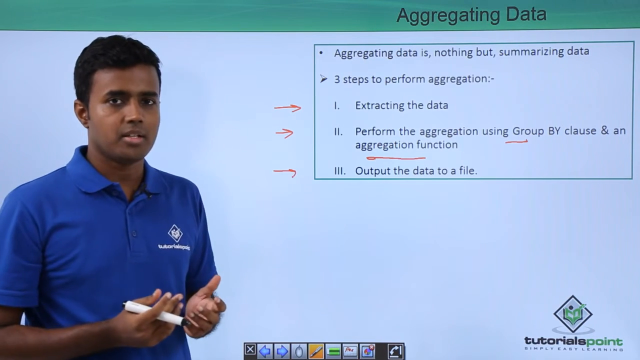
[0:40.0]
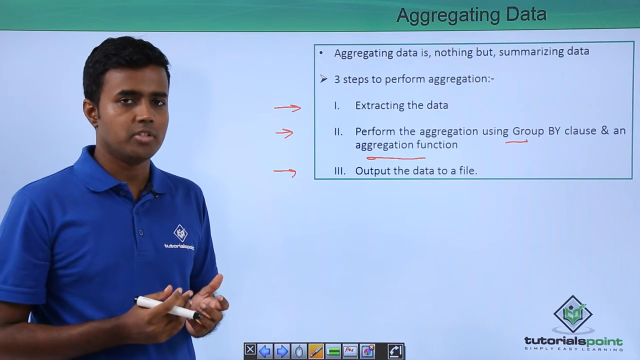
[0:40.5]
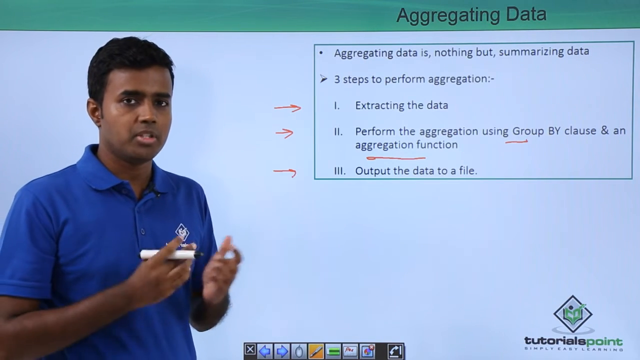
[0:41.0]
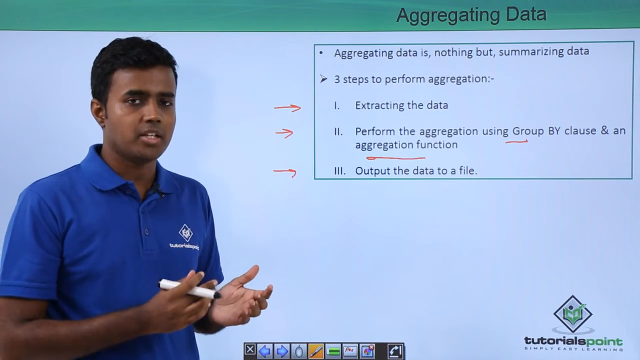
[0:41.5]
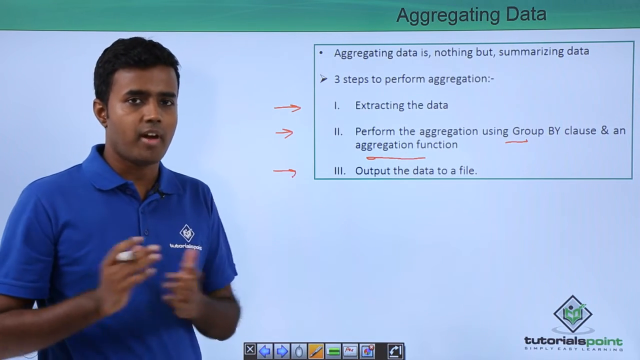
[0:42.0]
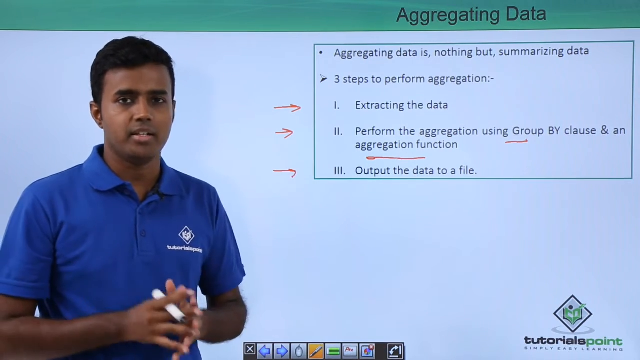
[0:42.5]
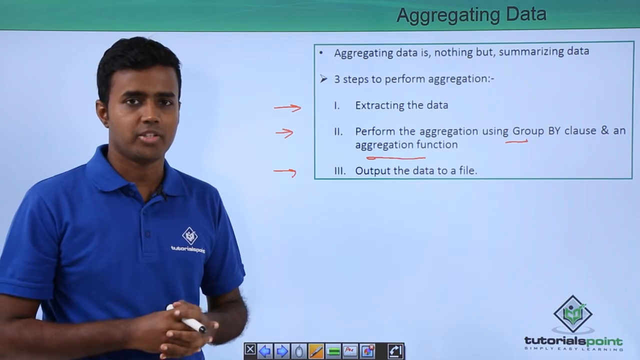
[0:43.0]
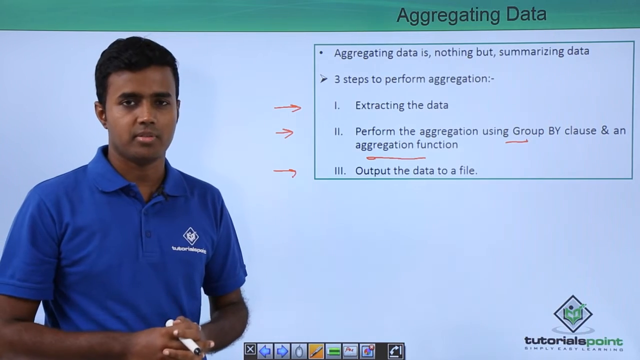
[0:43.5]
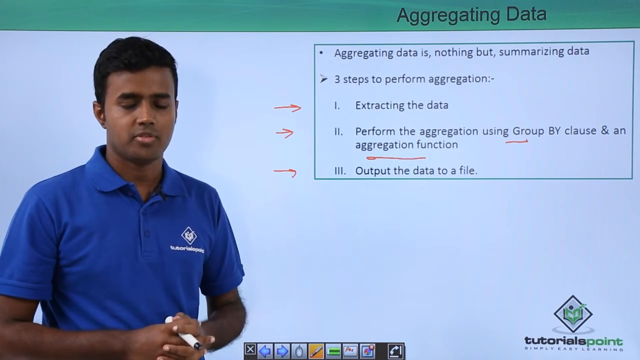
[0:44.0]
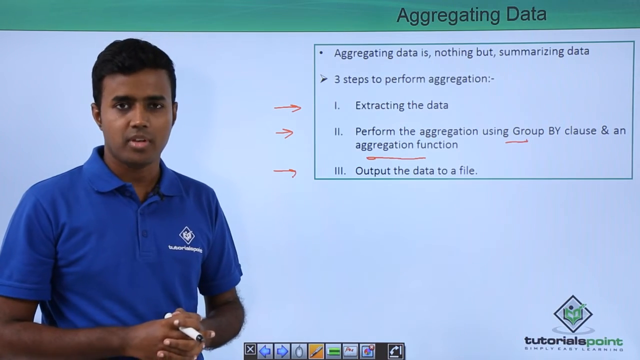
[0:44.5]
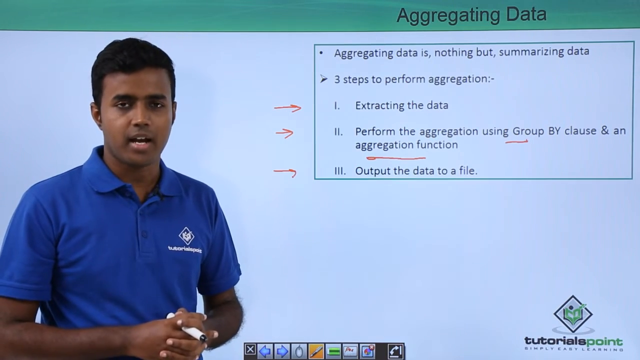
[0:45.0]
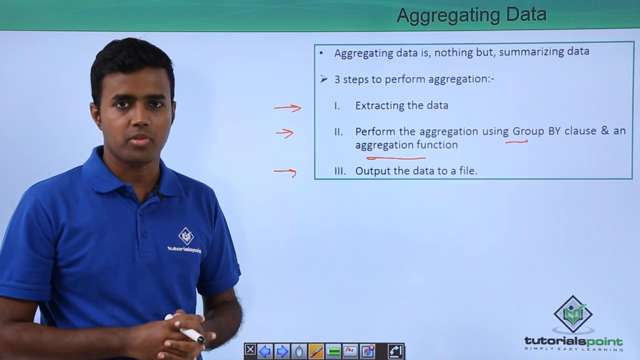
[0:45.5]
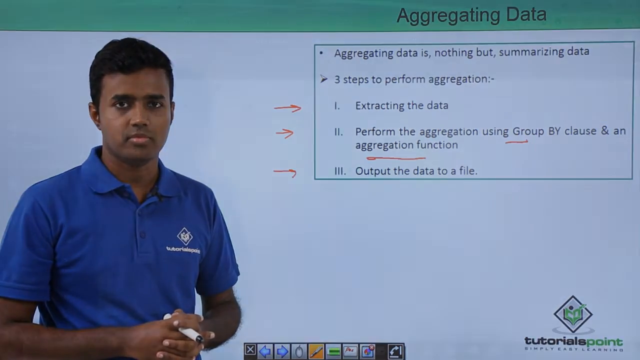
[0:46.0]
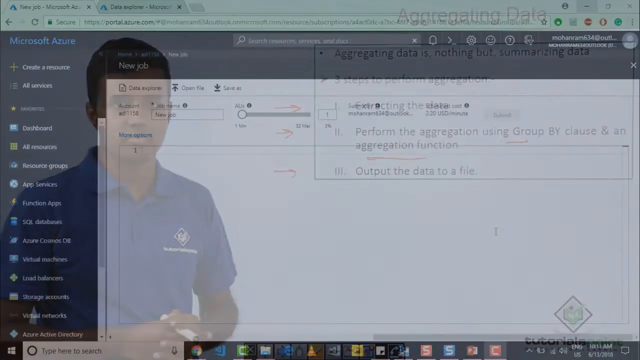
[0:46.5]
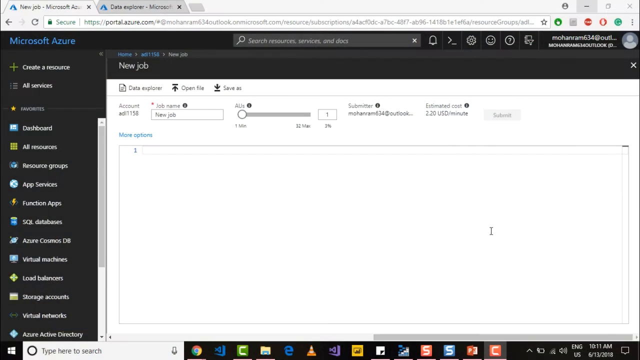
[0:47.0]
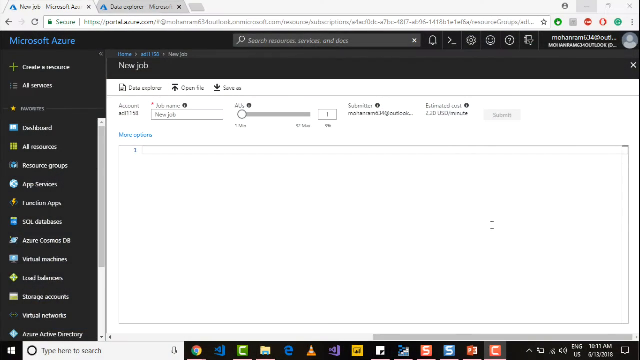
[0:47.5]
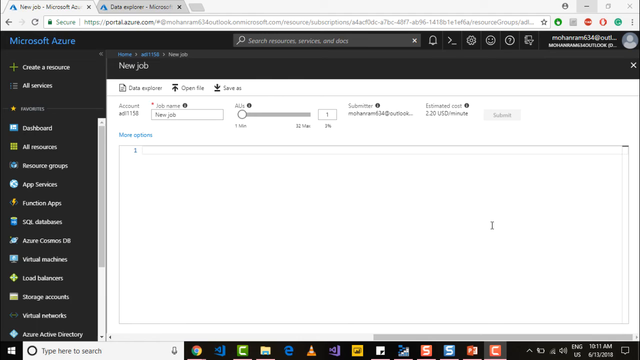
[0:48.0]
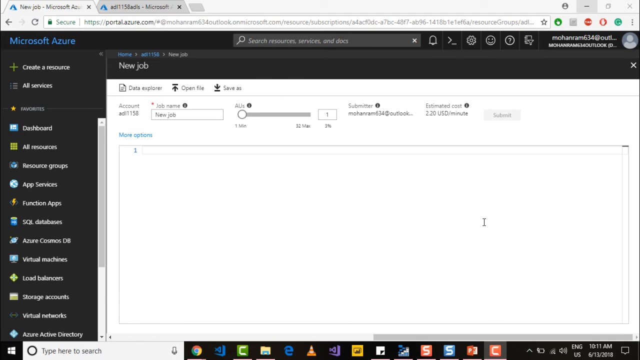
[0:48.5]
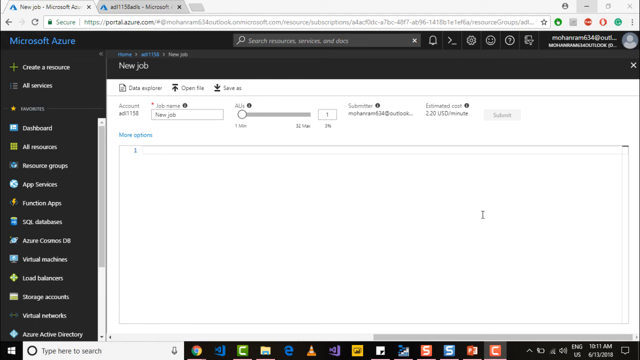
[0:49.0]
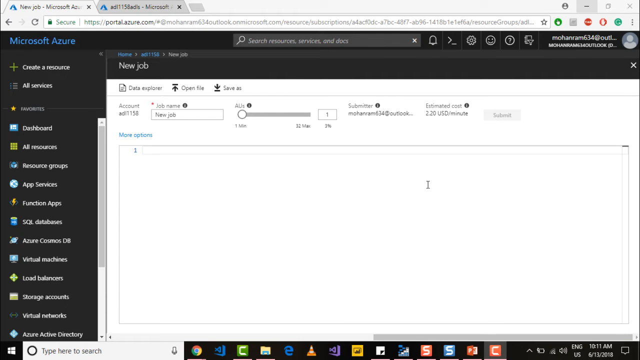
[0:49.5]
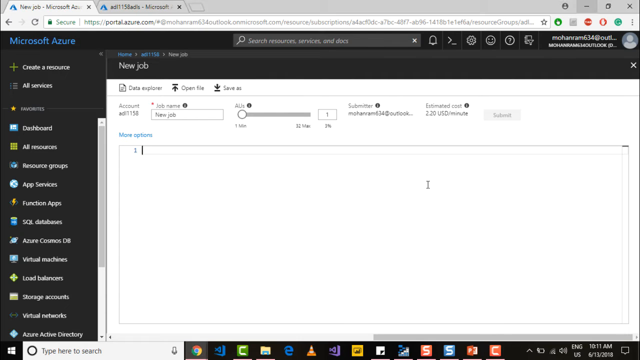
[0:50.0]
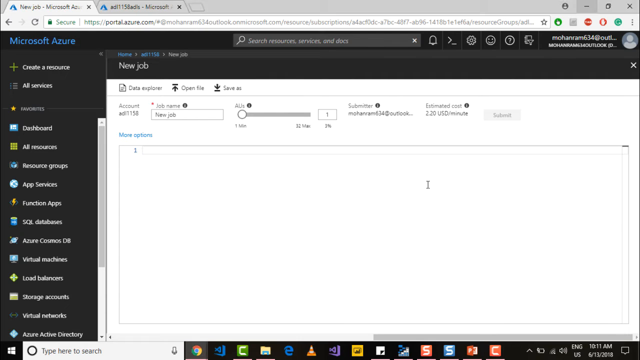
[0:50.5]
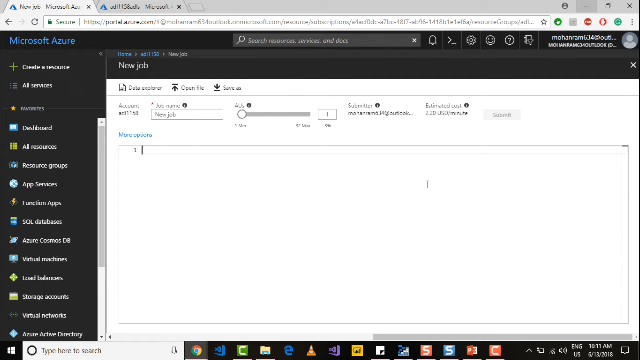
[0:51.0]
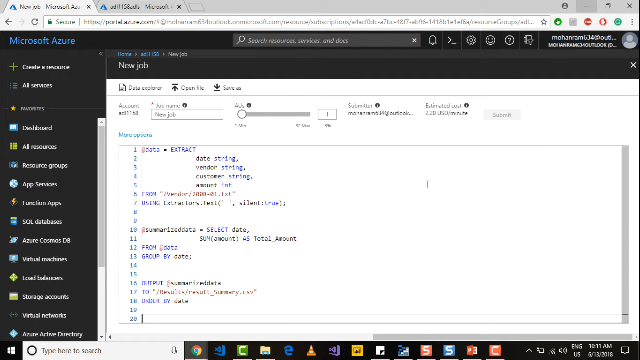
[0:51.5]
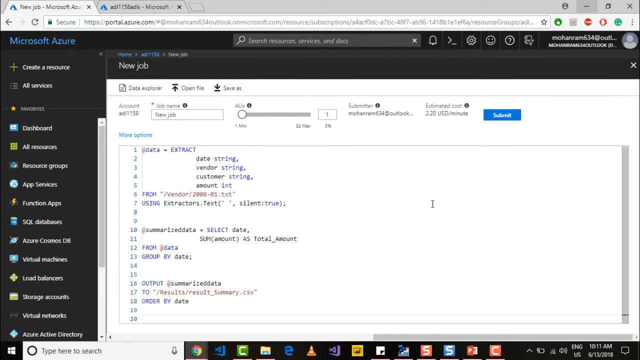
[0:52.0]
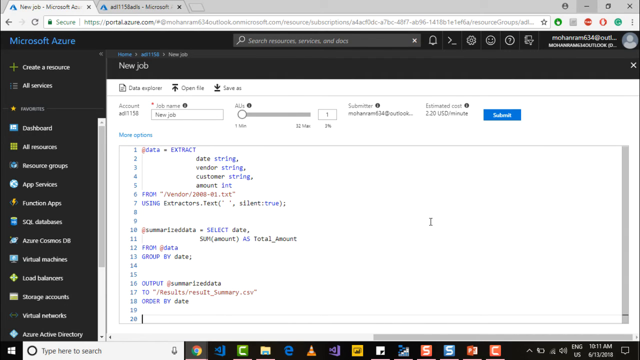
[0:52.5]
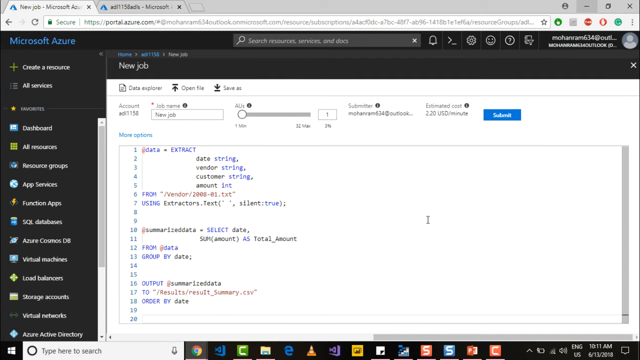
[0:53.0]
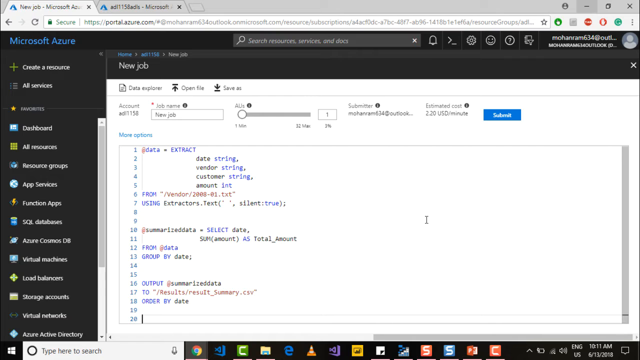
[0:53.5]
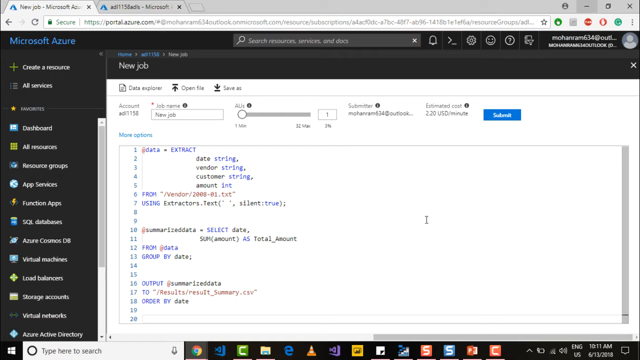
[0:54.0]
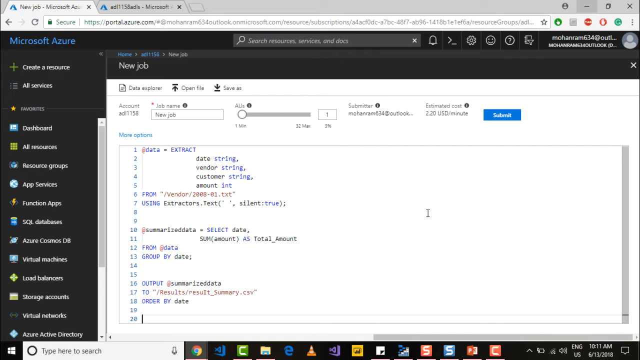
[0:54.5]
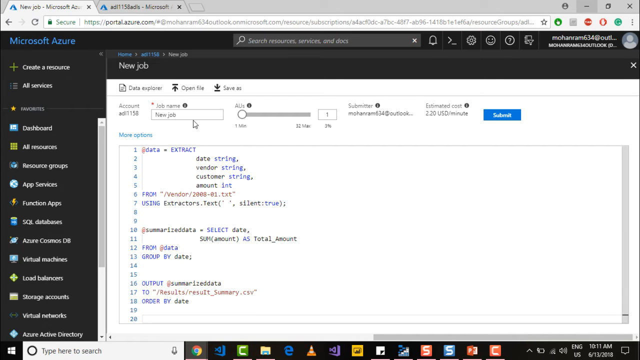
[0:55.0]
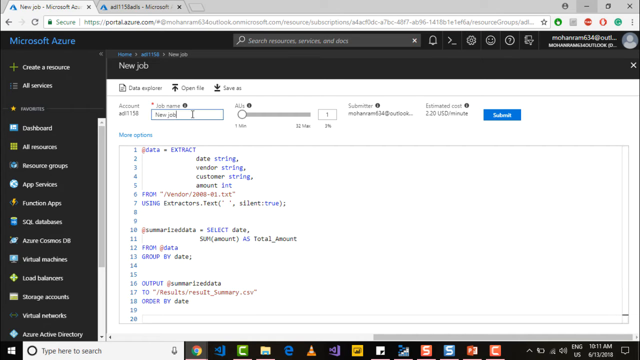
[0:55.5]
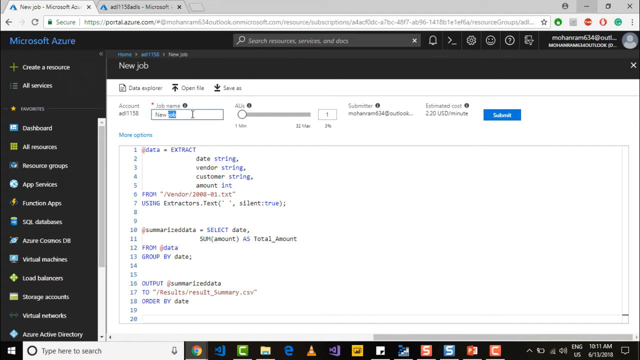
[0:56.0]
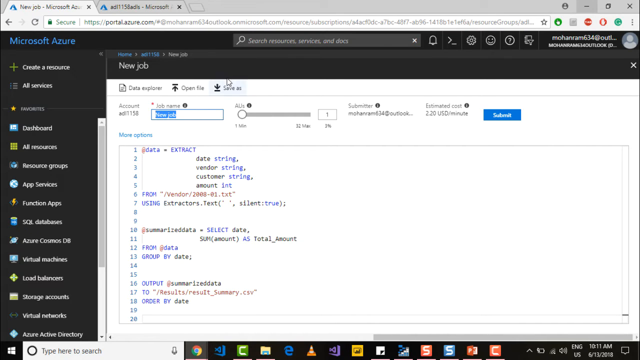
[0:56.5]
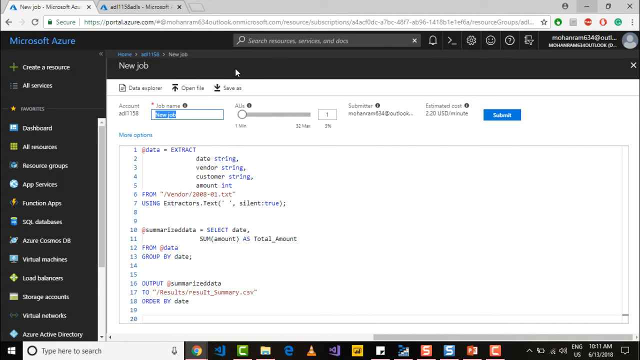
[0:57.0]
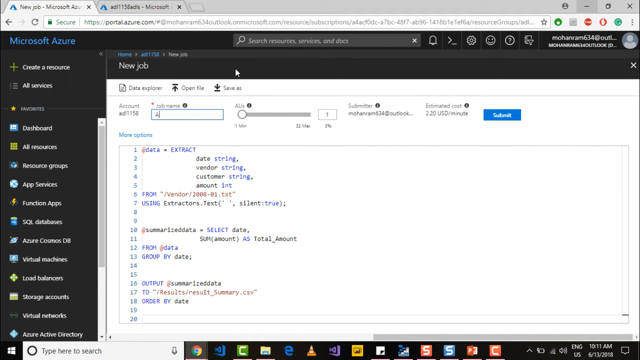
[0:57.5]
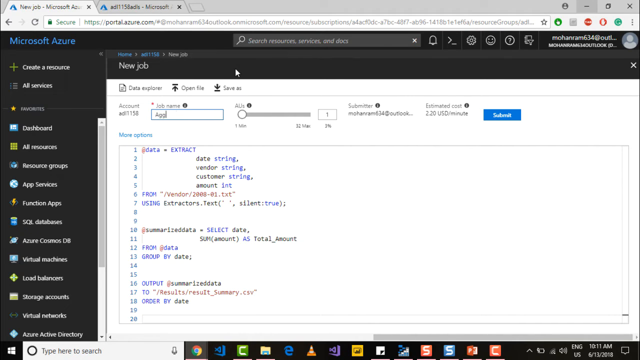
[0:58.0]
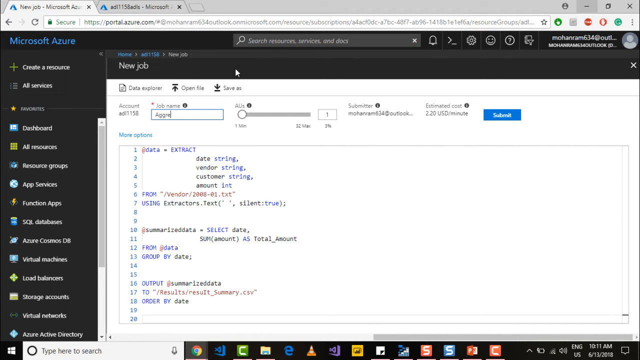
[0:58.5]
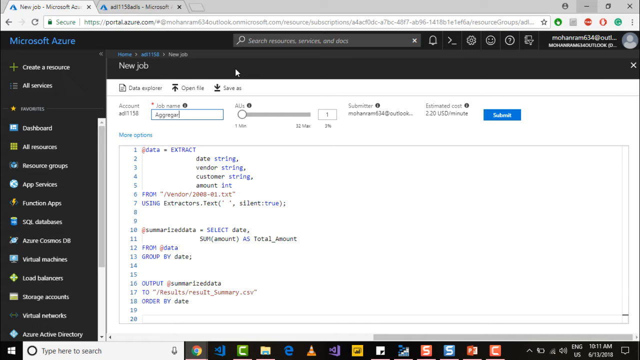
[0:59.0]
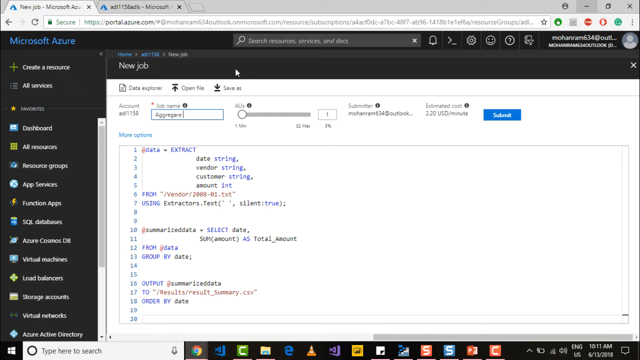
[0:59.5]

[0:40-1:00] "Aggregating data" is written in black text in the upper right corner against a dark green banner, with the three steps of aggregating data listed beneath. The young man has used his marker to draw a right arrow outside the box describing the three steps. He talks with a rather serious expression, frequently crossing his hands. Then a close-up of a computer screen appears, with the Tutorials Point logo in the lower right corner, apparently the same name written on his shirt. The video then turns to a close-up of a computer monitor with a tab open for "new job." Below, a Microsoft Azure page is open, with "Microsoft Azure" in blue text in the upper left corner. The white page reads "Data Explorer" in the upper left corner, followed by "Open File" and "Save As." Below, the job name box contains the words "new job." The mouse moves around the page, and suddenly lines of script appear. The mouse goes back to the job name and types.